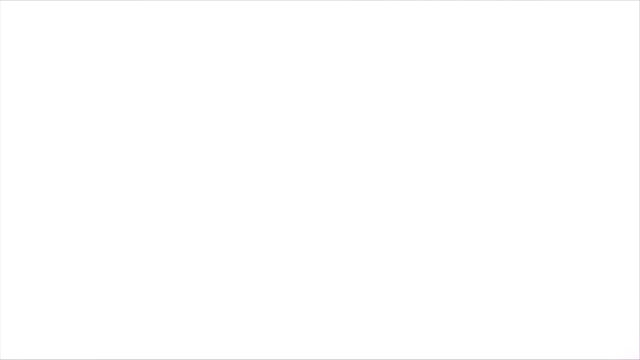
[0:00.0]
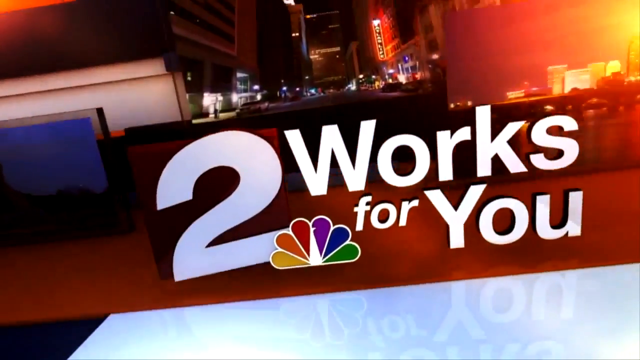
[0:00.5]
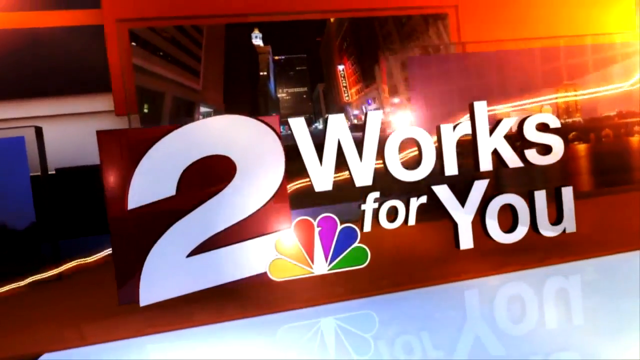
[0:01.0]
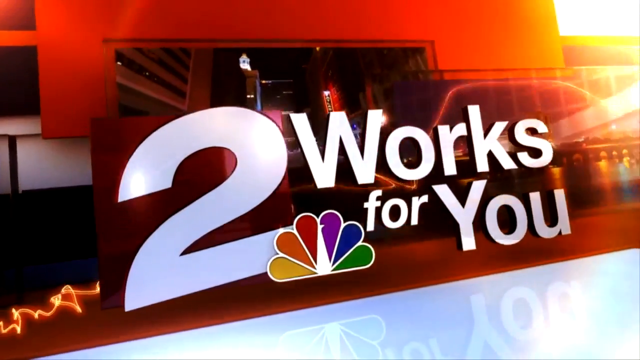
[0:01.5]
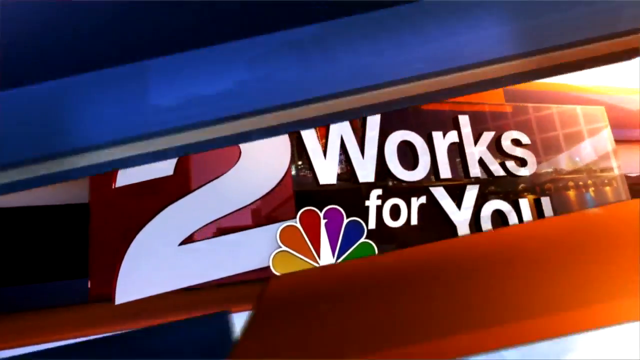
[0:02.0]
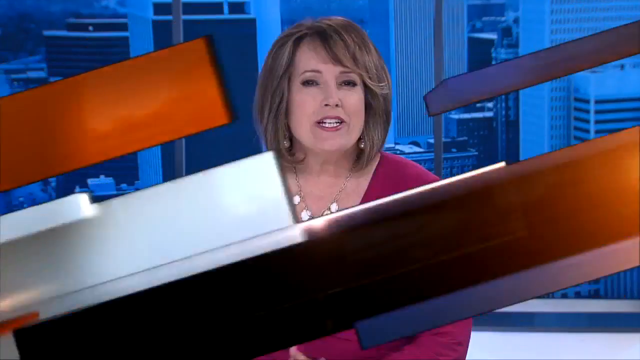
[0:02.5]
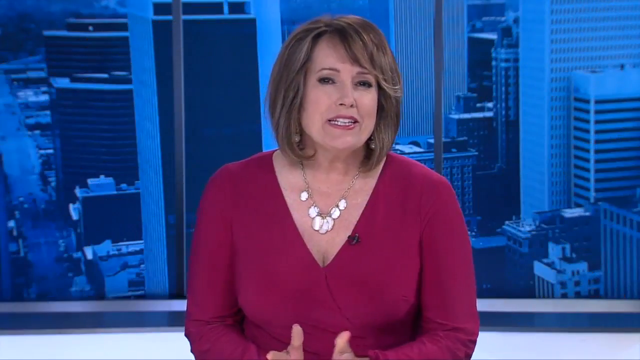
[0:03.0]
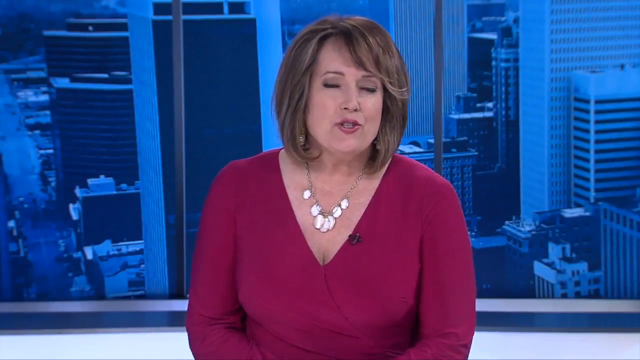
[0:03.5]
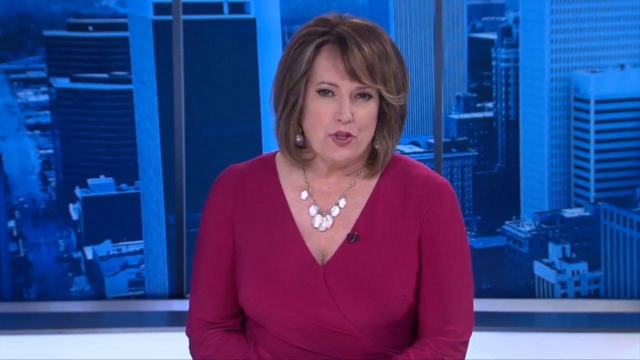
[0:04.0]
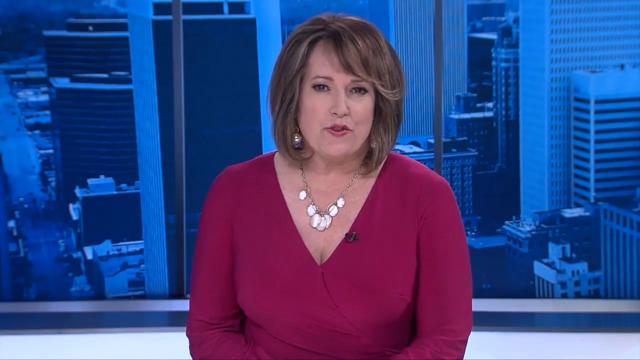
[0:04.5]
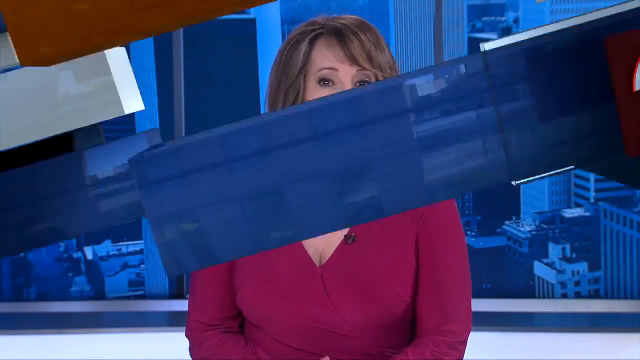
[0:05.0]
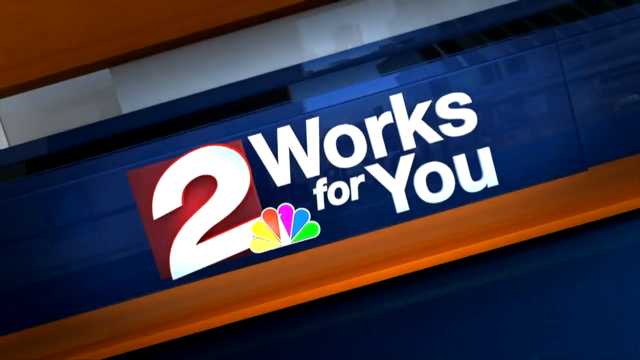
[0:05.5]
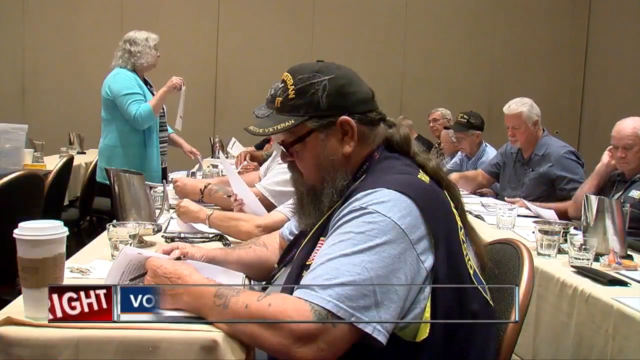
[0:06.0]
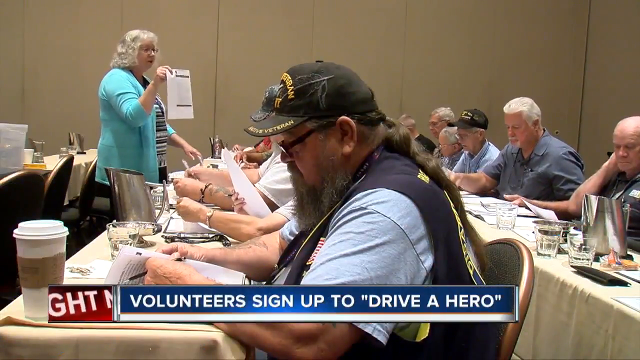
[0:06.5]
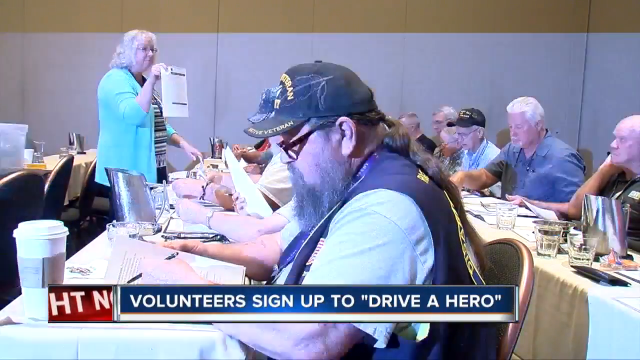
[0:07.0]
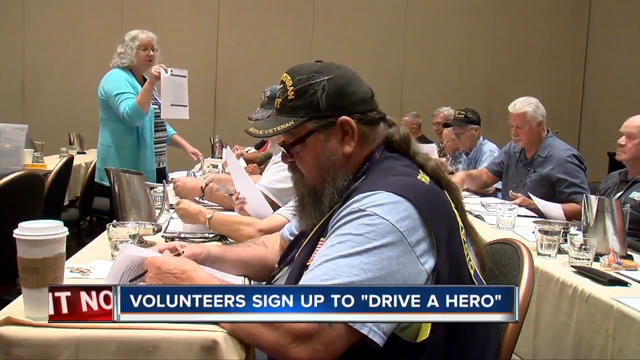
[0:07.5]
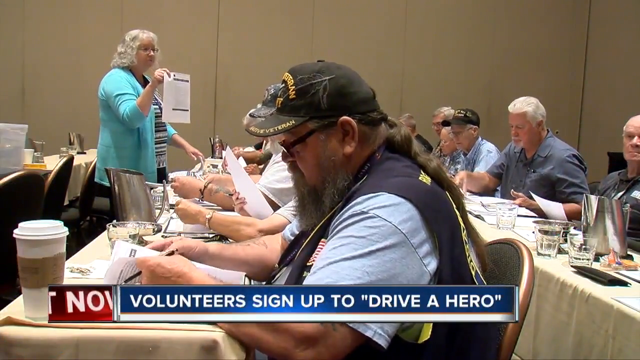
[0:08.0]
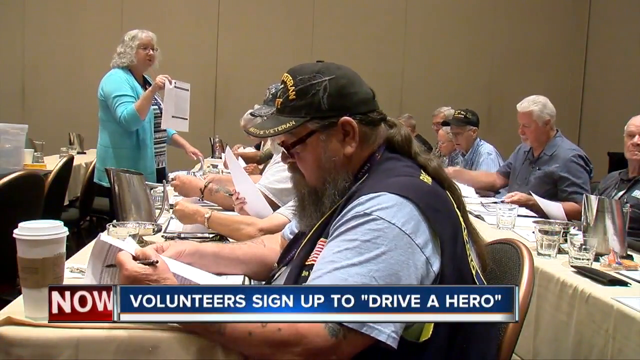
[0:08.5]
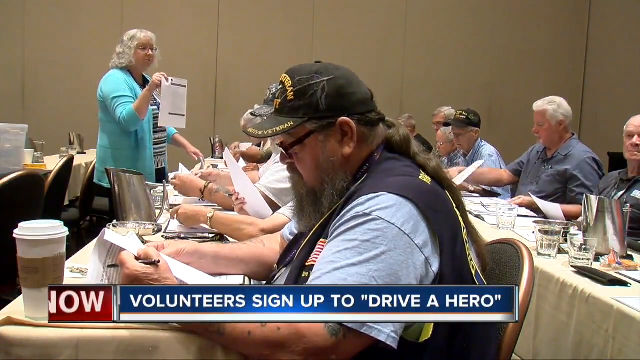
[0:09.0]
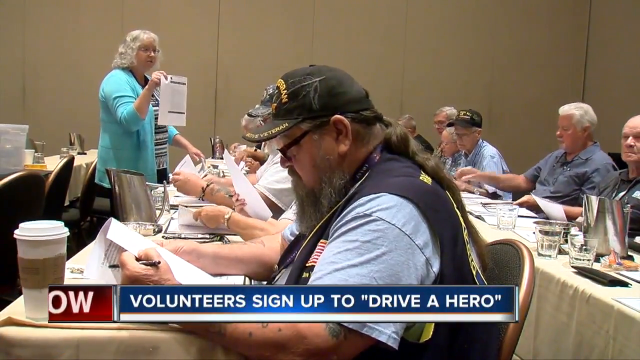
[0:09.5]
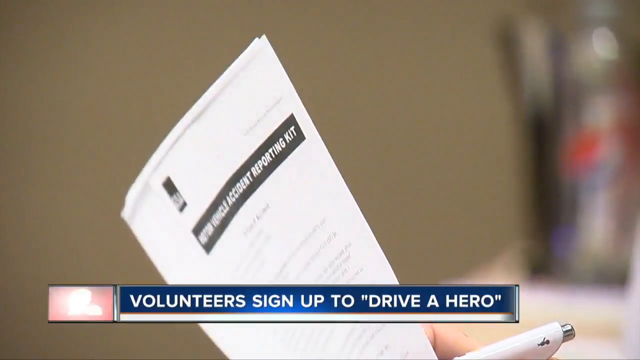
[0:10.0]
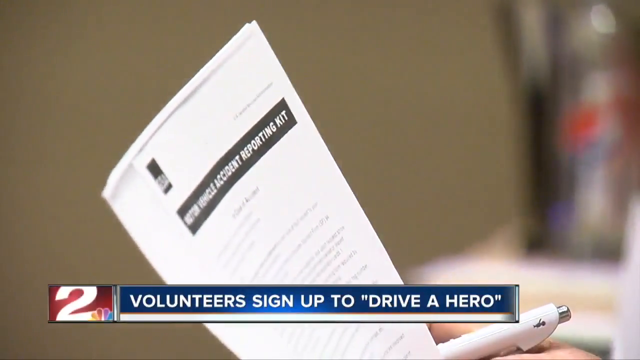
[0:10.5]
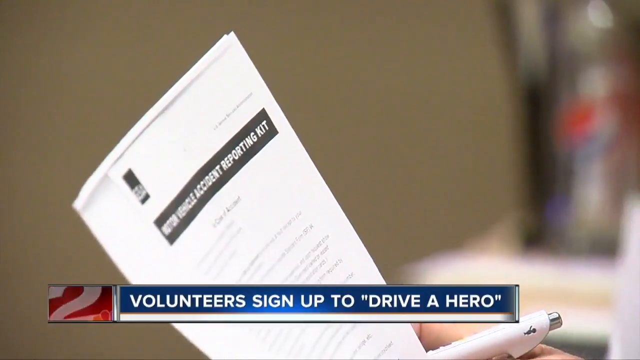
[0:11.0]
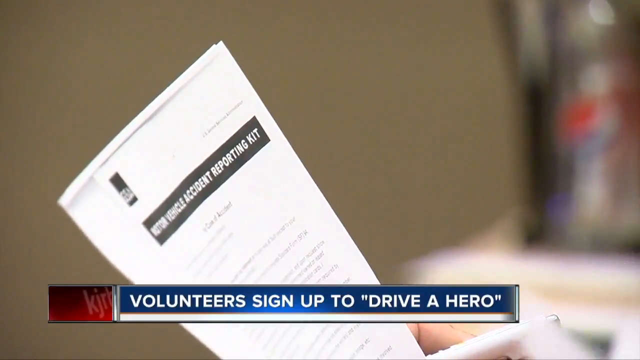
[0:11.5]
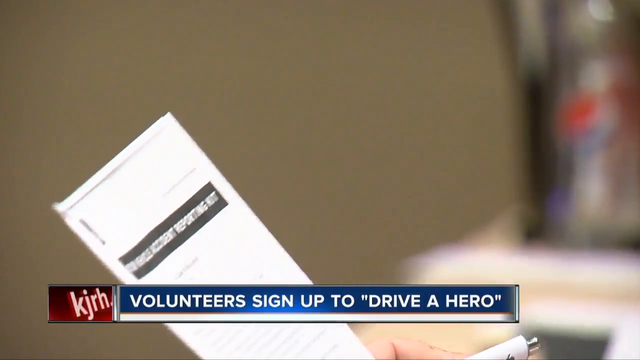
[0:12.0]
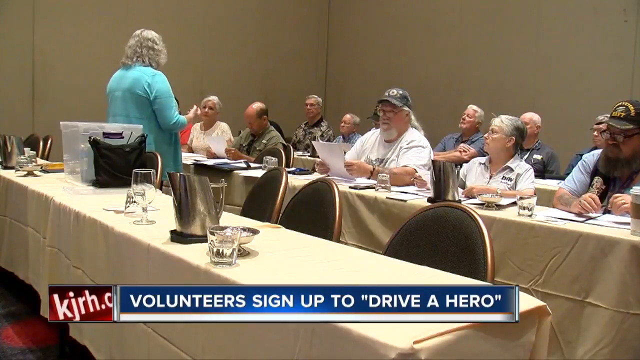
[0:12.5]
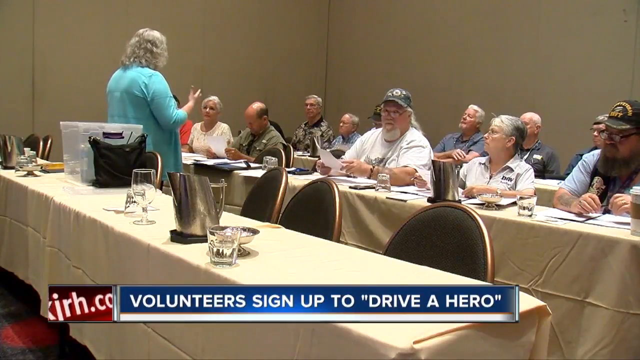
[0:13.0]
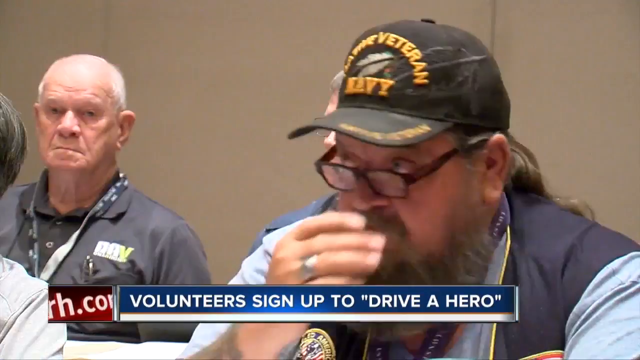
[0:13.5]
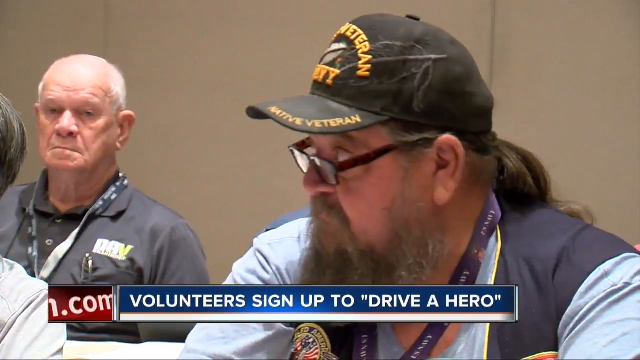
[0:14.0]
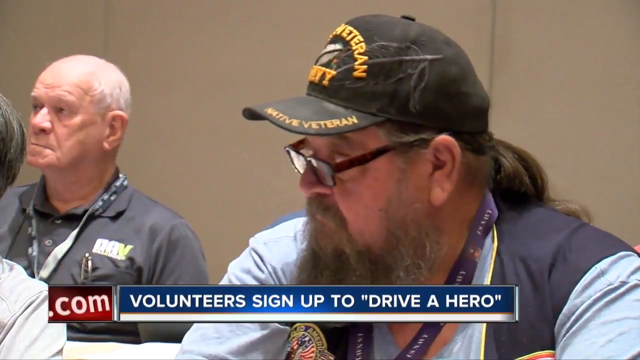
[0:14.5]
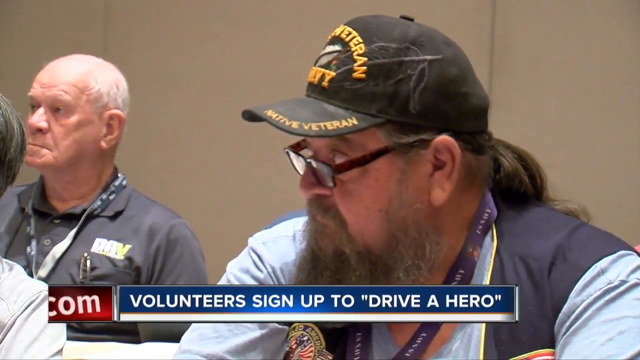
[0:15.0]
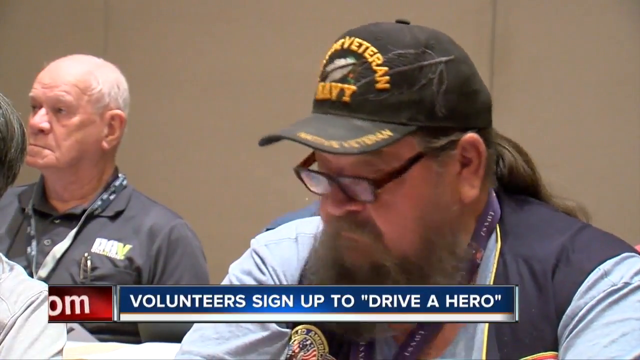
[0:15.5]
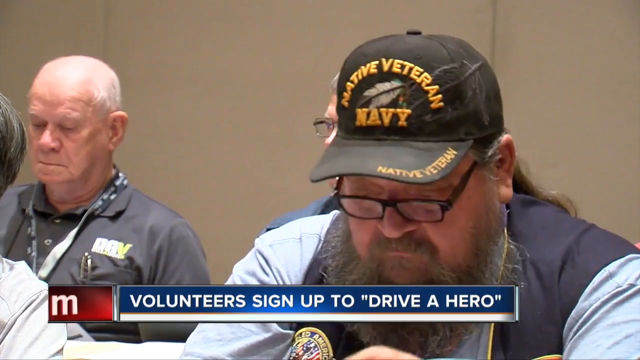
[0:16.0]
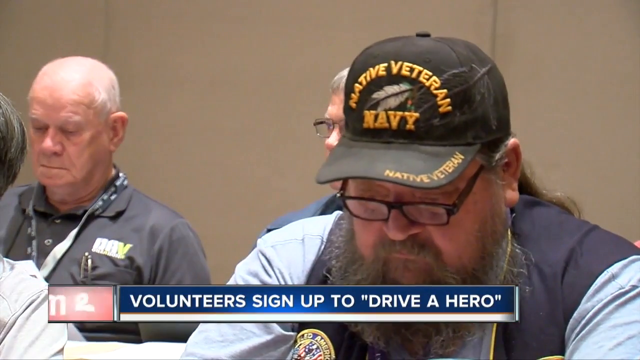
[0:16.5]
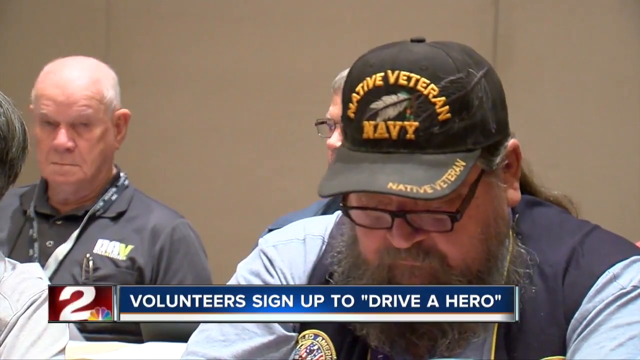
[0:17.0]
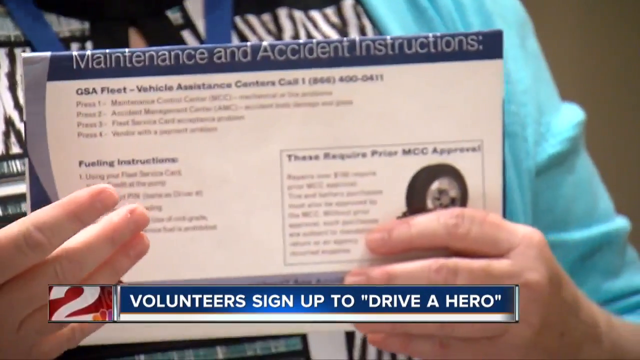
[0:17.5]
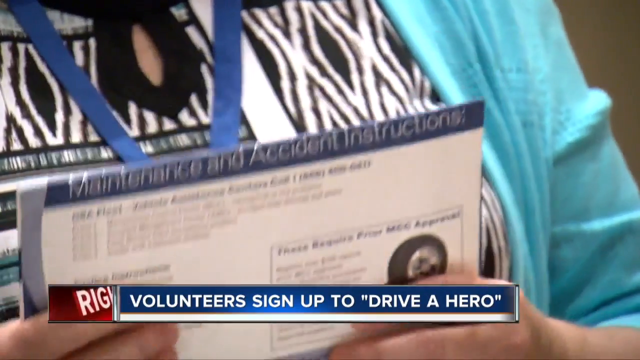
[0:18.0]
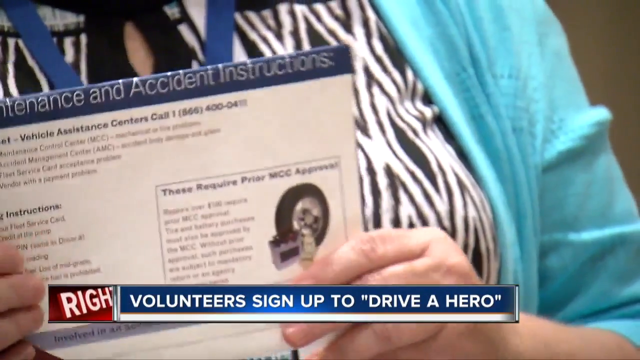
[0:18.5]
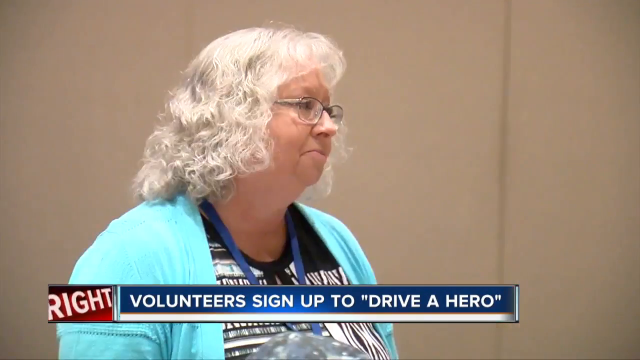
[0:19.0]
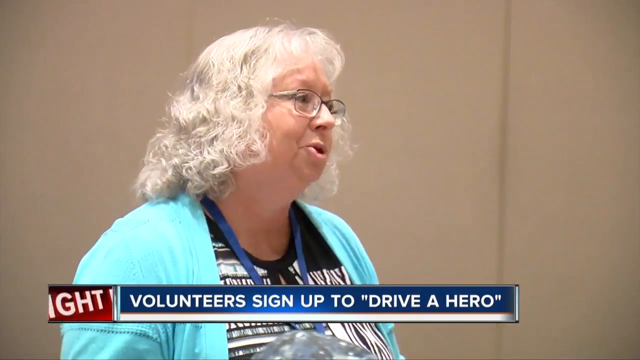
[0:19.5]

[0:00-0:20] A graphic opens the video, showing the number two and "works for you" with the NBC peacock logo below it. Behind it are various images of cityscape buildings in sort of red tones. As the newscast starts, the camera pans to an anchorwoman sitting at a desk. She looks to be mid to late 40s, with a shoulder-length bob of light brown hair with subtle highlights. She wears a cranberry-colored blouse and a necklace that looks like it has silver circles on it. The backdrop behind her is an image of various city buildings in blue tones. The "two works for you" graphic with the NBC peacock logo pops back up. The scene cuts to a room full of mostly older men, all Caucasian as far as can be seen, with gray hair, probably mostly in their 60s and up, seated at two rows of tables. The man closest to the camera is heavyset, probably late 50s to early 60s, with long hair pulled back in a ponytail and a green beard. He wears a black hat about being a veteran, a blue t-shirt, a vest and black glasses, and he looks down at paperwork, as do all the others sitting at the tables. A woman, probably in her 60s or 70s, with shoulder-length curly white-gray hair and a blue cardigan, stands in front of the room holding up a sheet of paper. A caption at the bottom of the screen reads "Volunteers sign up to drive a hero." The camera pans to a close-up of paperwork reading "new vehicle accident reporting kit," then pans to a view from behind the woman as she speaks to the room. A close-up shows the man in the veteran hat, which says it is for the Navy. Behind him and to the left is a Caucasian man, apparently in his 70s, with very short gray hair, a charcoal gray polo shirt and a blue lanyard. They look down at the paperwork in front of them and then up at the speaker. A close-up shows paperwork she is holding, with maintenance and accident instructions, and then her face as she speaks to everyone. She has shoulder-length curly gray hair and wears glasses, a light teal cardigan, a black blouse with various white patterns, and a blue lanyard.